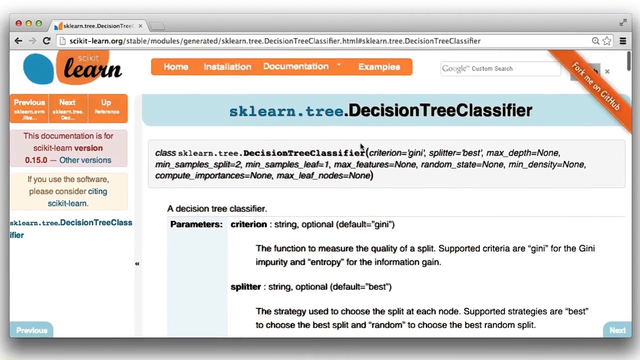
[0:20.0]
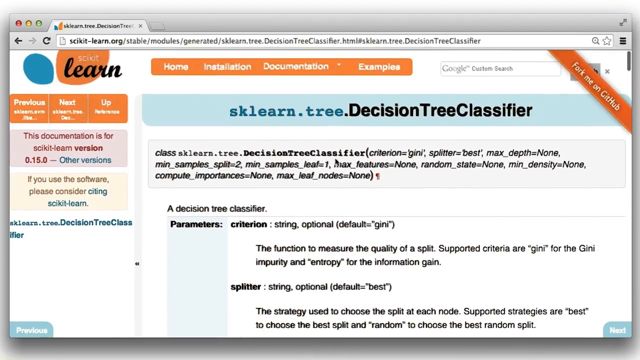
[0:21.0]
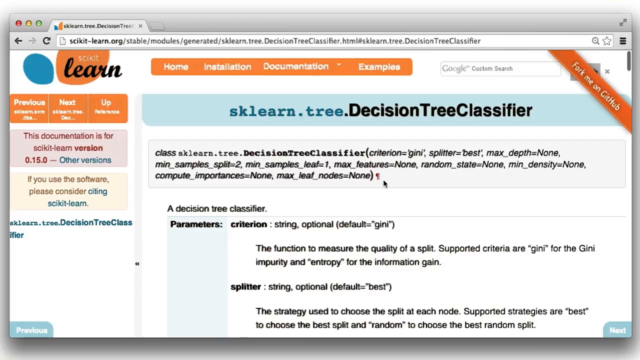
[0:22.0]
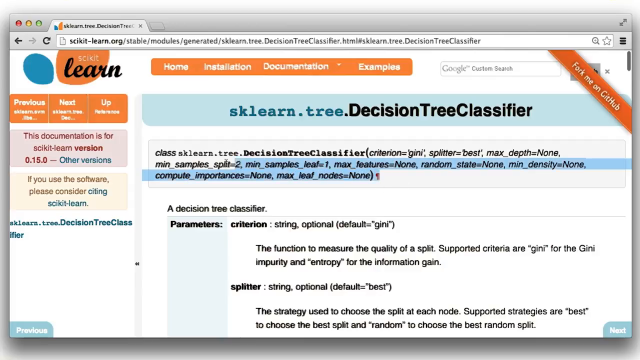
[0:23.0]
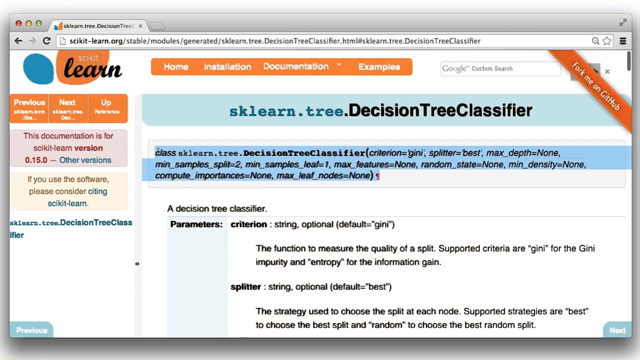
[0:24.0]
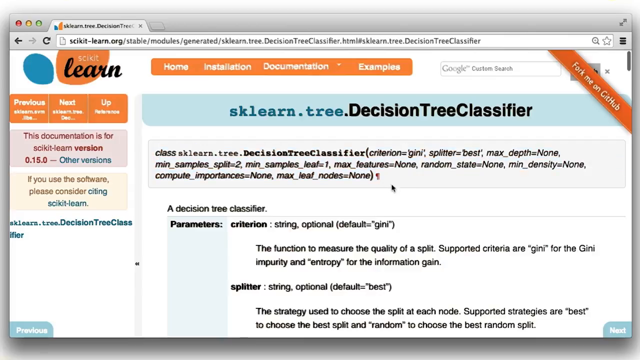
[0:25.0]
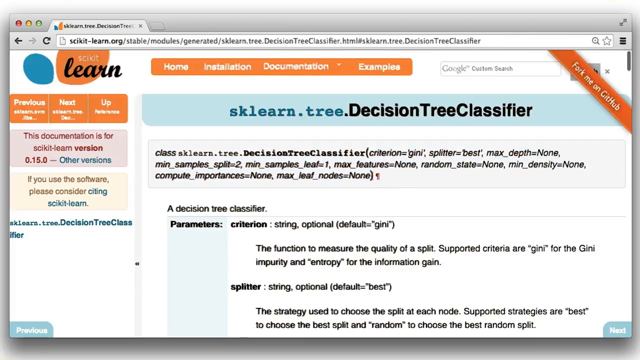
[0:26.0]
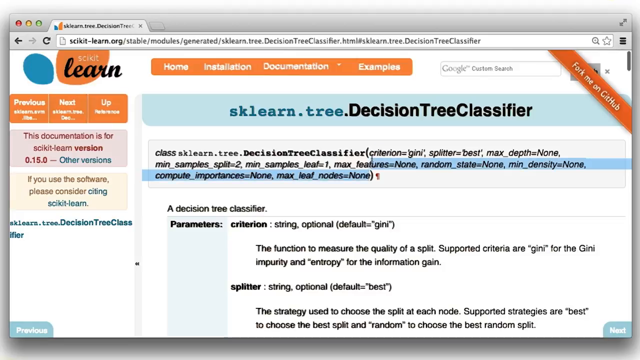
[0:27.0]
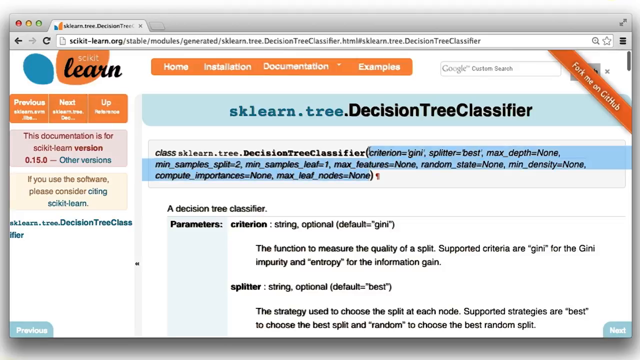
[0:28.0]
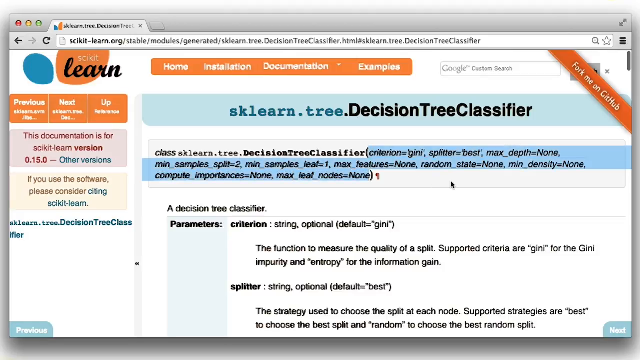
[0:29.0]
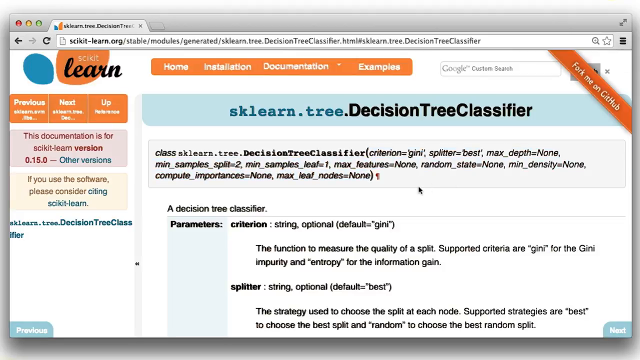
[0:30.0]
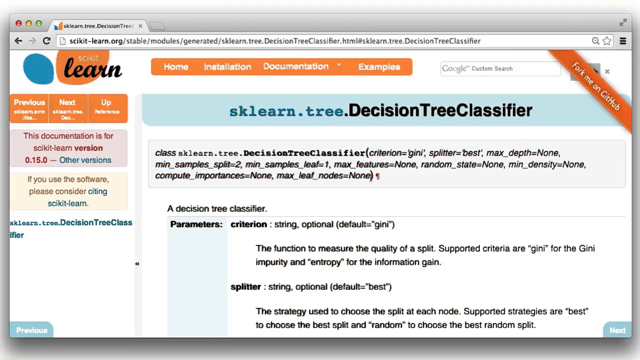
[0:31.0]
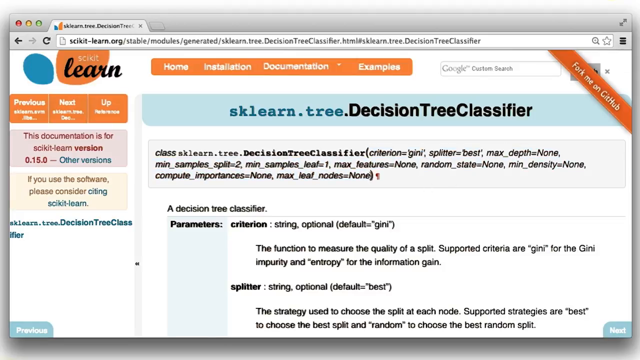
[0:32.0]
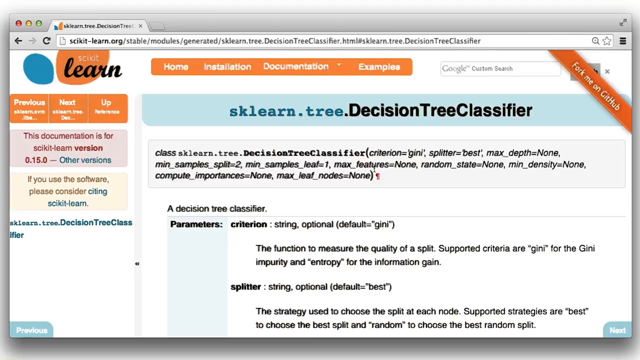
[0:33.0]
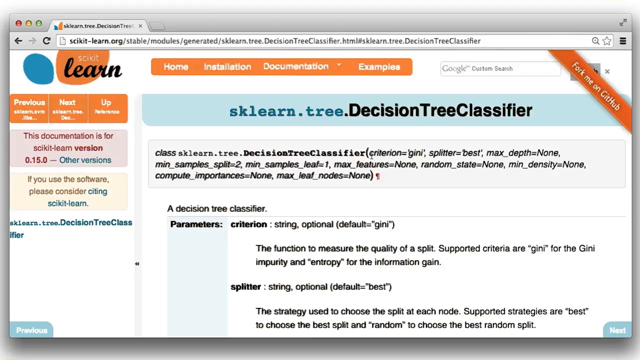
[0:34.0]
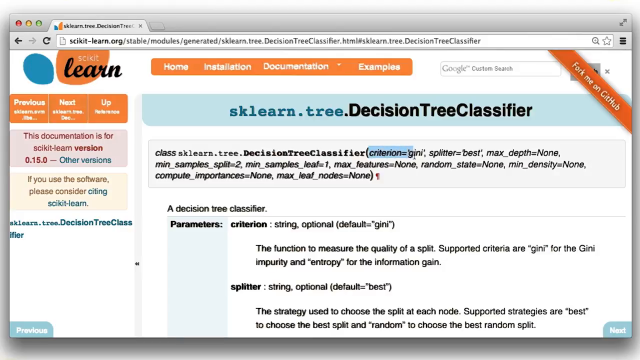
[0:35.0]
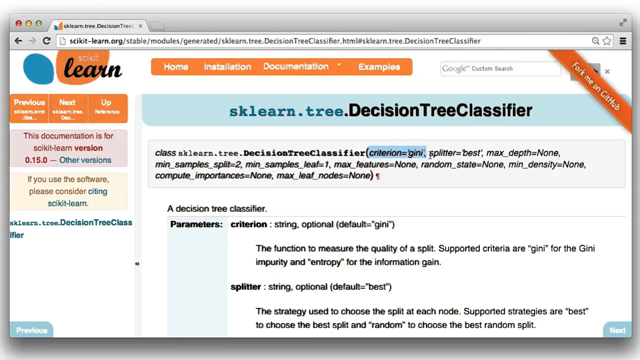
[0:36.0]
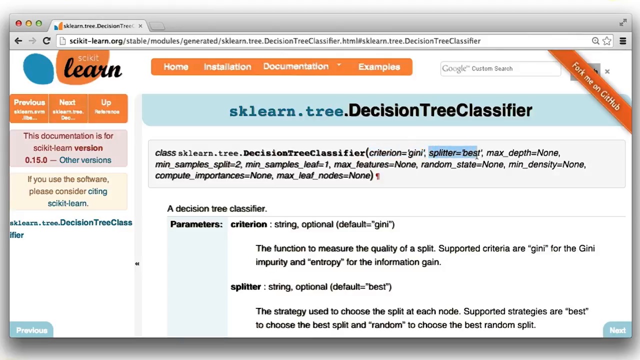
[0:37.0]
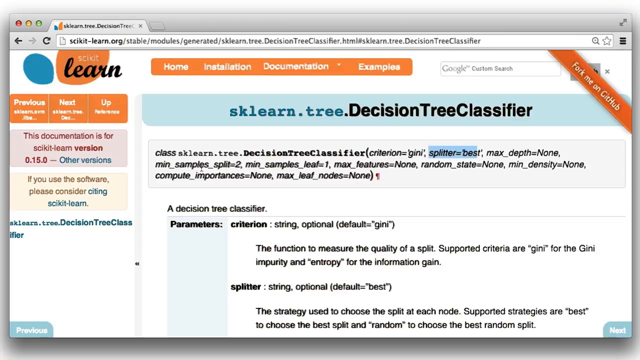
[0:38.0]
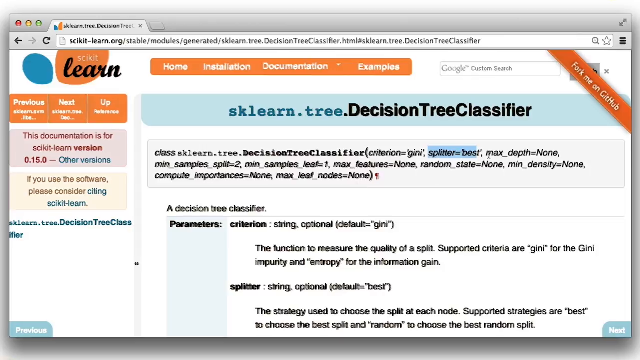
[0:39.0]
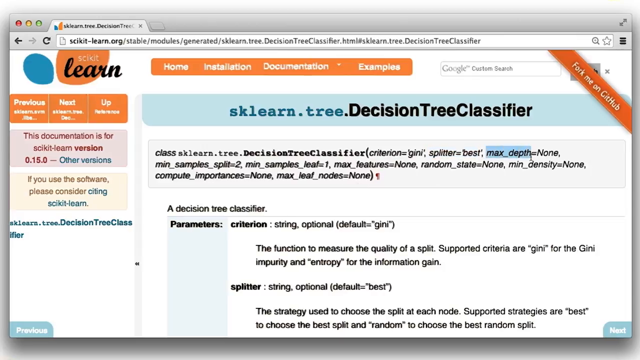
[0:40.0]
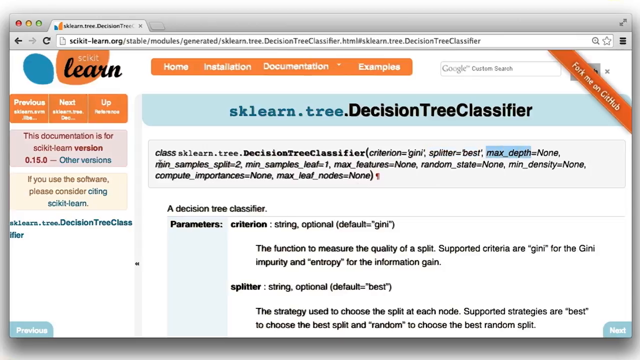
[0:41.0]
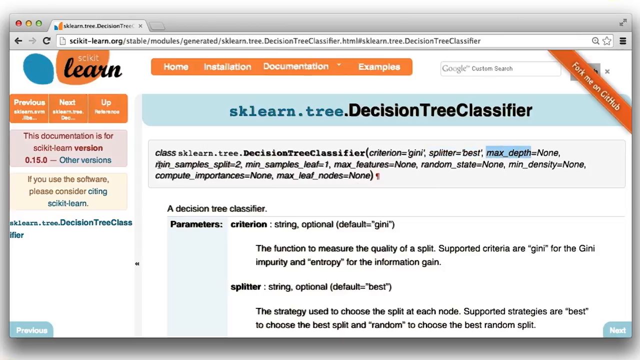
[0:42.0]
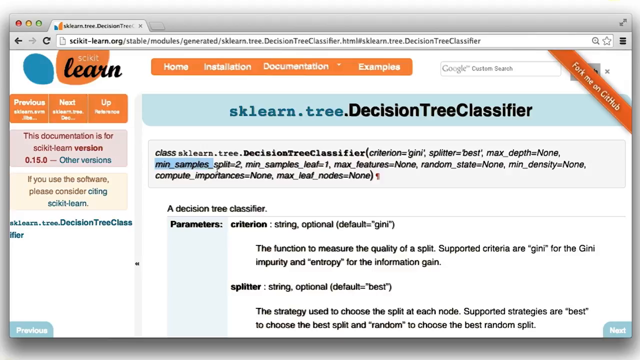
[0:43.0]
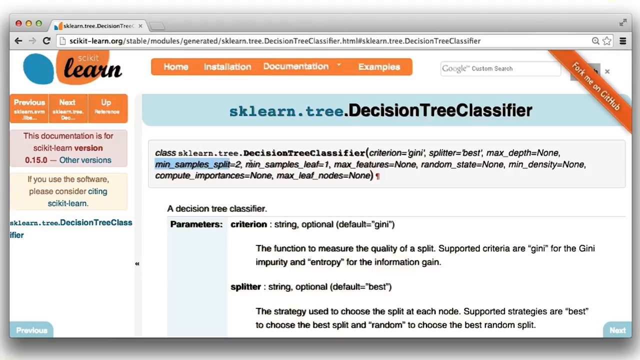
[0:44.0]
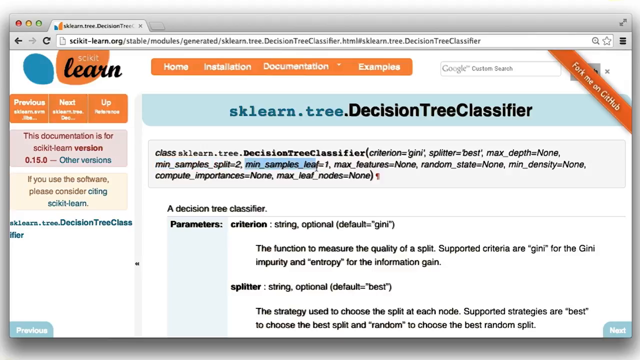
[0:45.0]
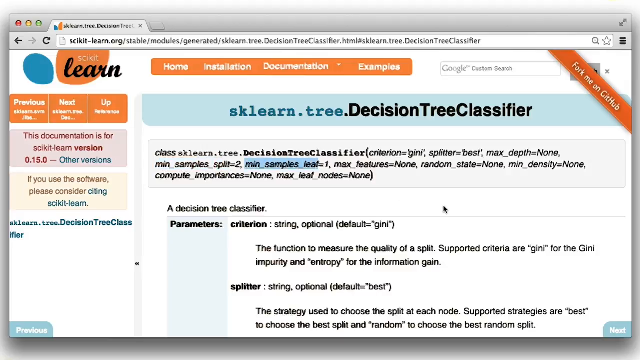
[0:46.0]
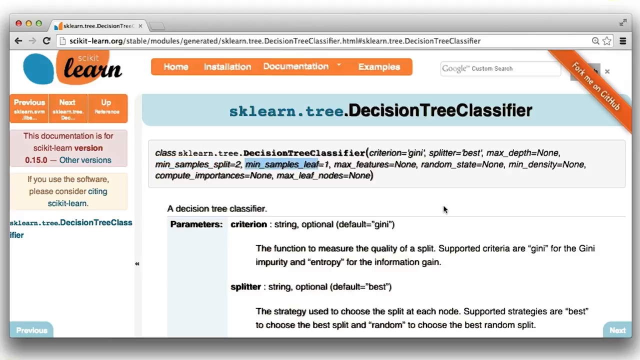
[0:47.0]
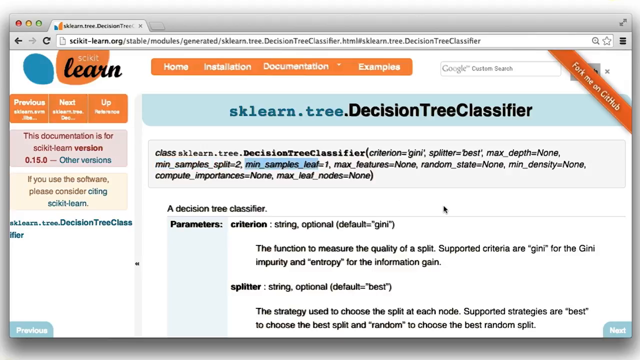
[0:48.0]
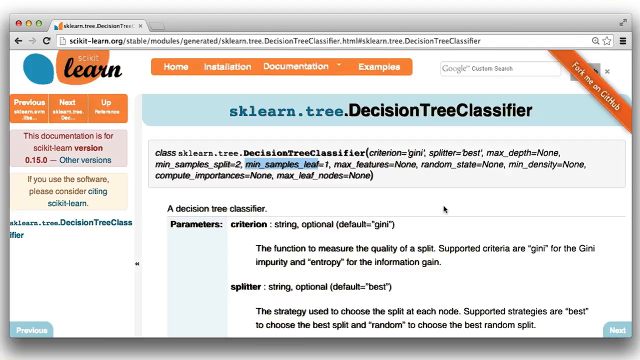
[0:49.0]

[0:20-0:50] The page "sklearn.tree.decisionTreeClassifier" is shown, with the implementation that has DecisionTreeClassifier followed by parentheses containing the parameters. The person highlights that box, then hovers over just the parameters repeatedly, and eventually highlights individual parameters: first criterion, then splitter, then max depth, minimum sample split and minimum sample leaf. Just below this description is a table. In the small visible part, the left column has parameters in what looks like a light blue color, and the much bigger second column holds the content, for example criterion, which is a string and optional, and splitter, which is also a string and optional. The parameters are given with their default values and a short description of what each does.